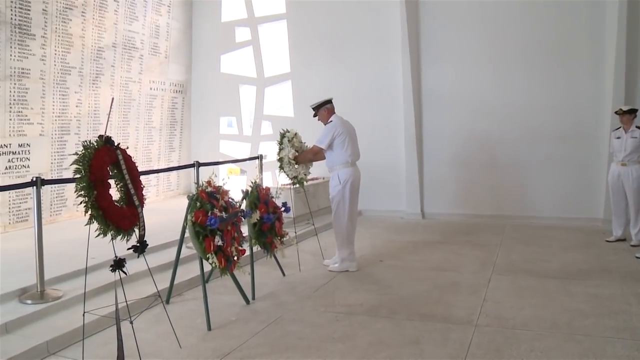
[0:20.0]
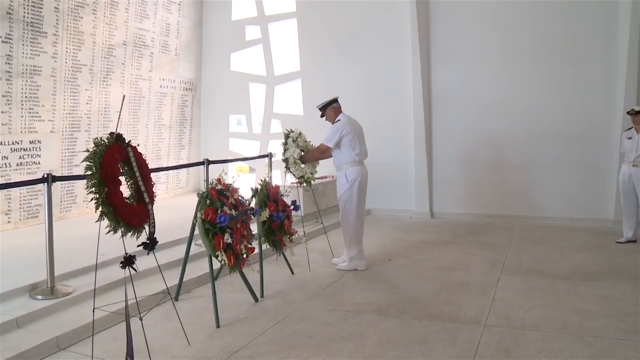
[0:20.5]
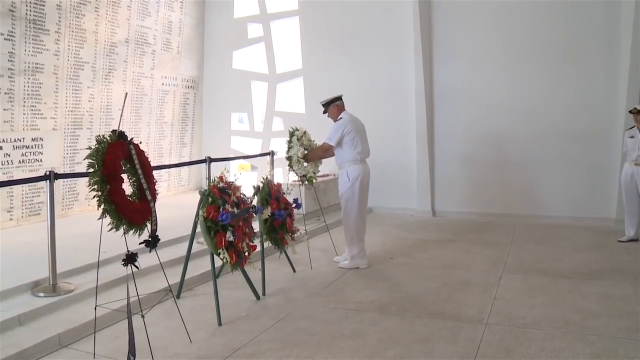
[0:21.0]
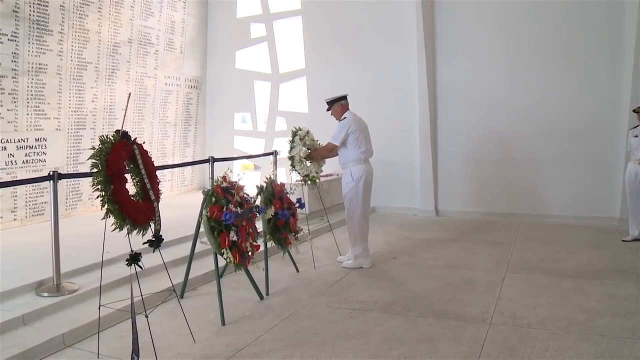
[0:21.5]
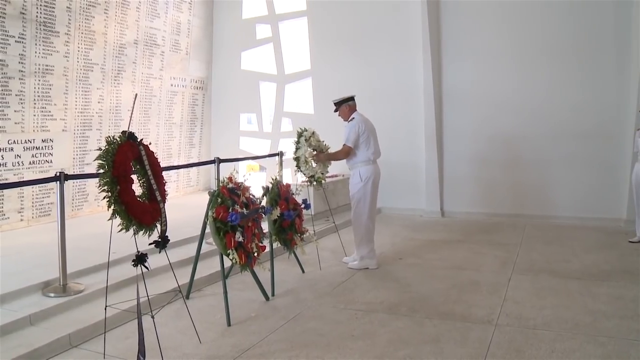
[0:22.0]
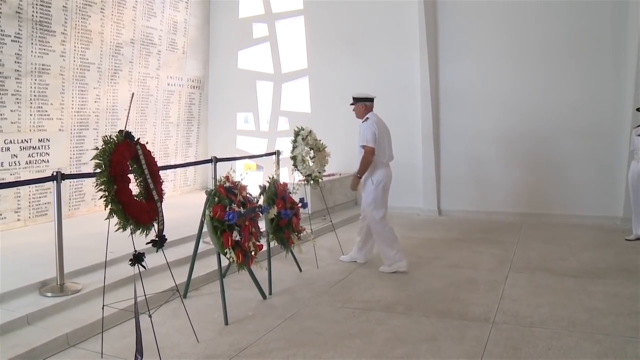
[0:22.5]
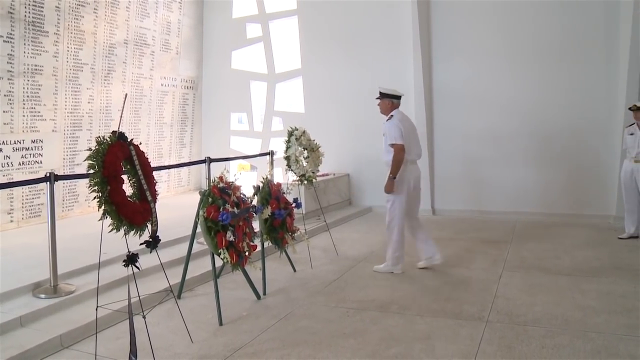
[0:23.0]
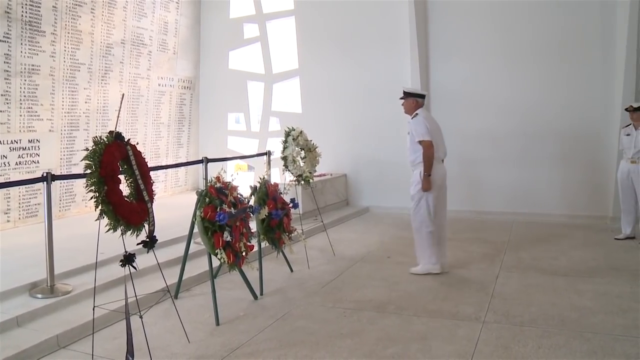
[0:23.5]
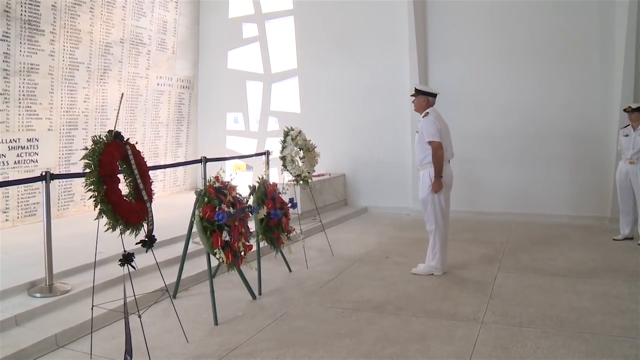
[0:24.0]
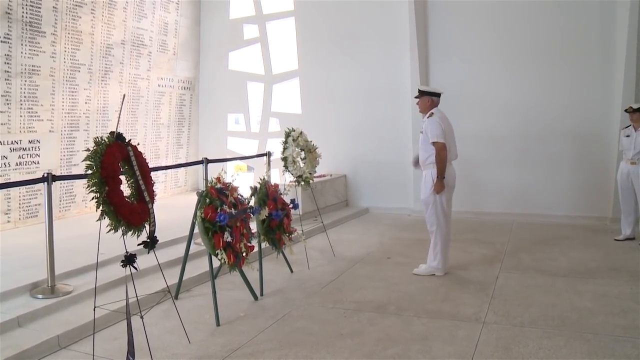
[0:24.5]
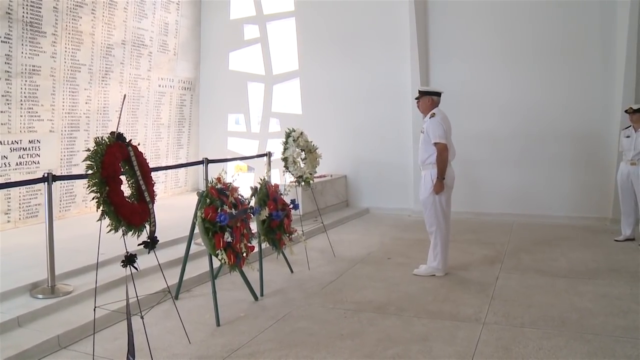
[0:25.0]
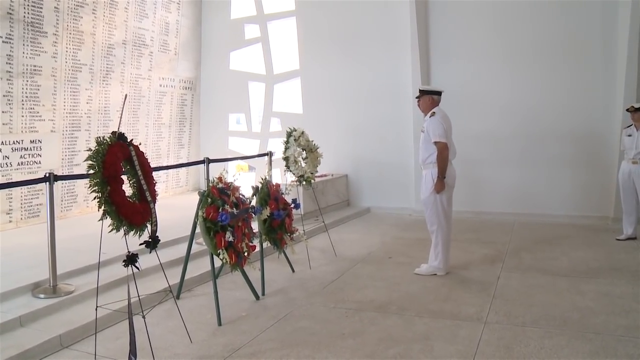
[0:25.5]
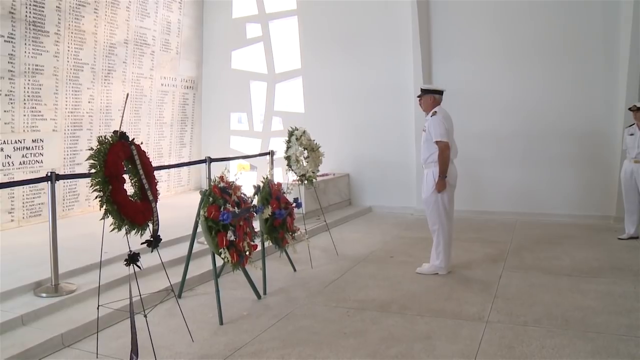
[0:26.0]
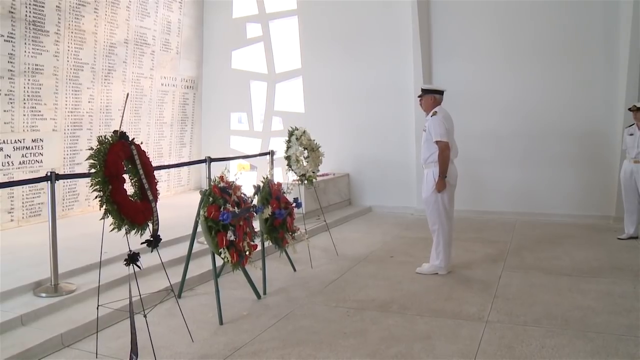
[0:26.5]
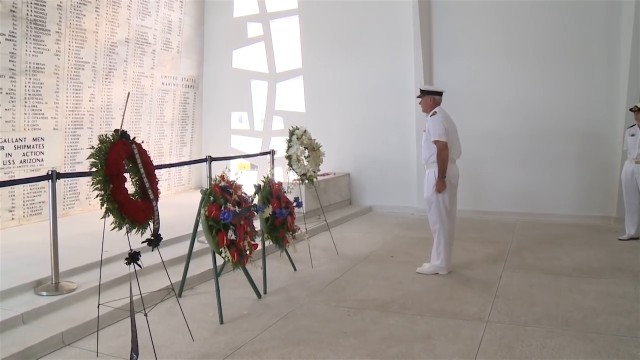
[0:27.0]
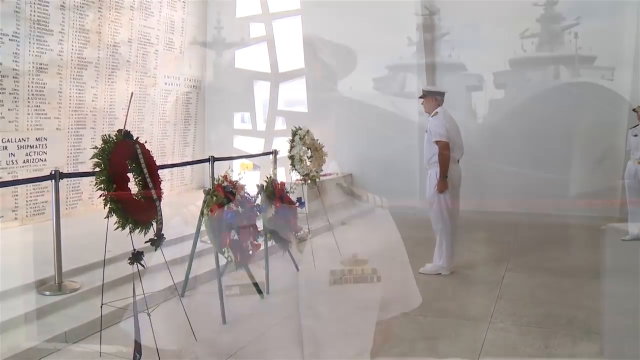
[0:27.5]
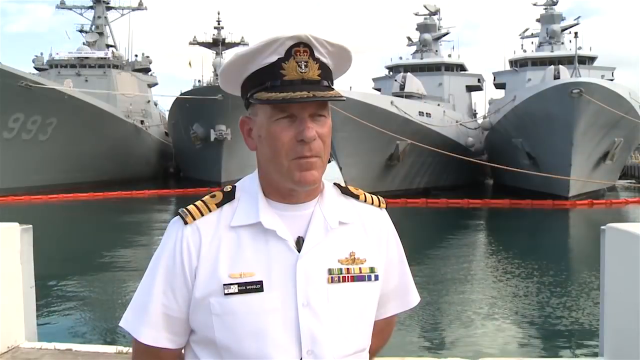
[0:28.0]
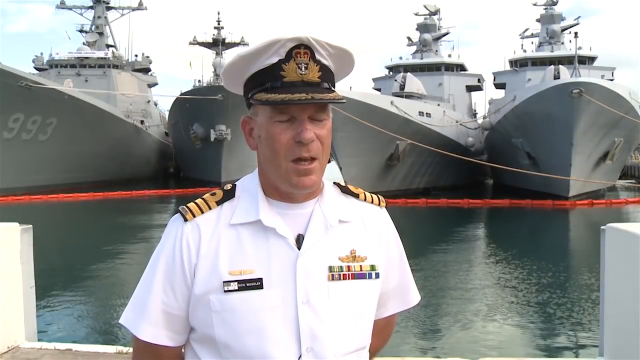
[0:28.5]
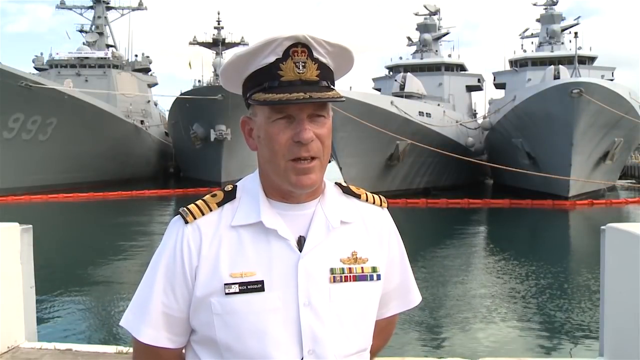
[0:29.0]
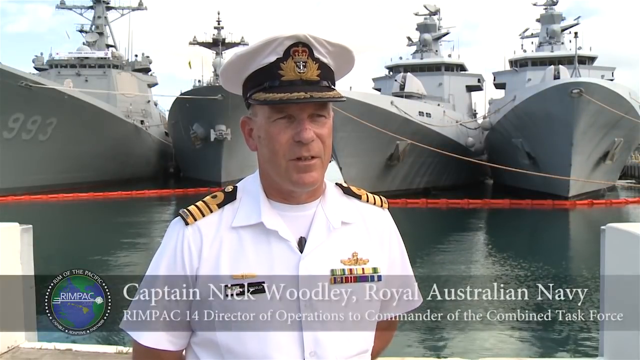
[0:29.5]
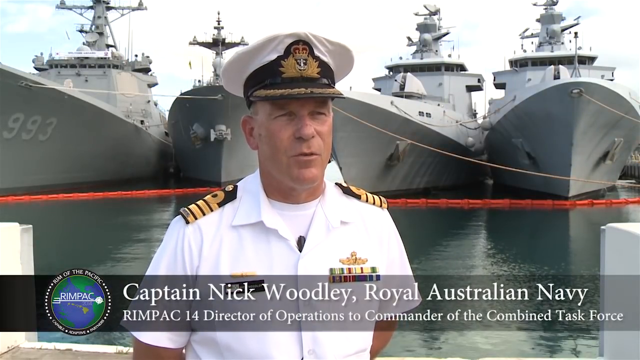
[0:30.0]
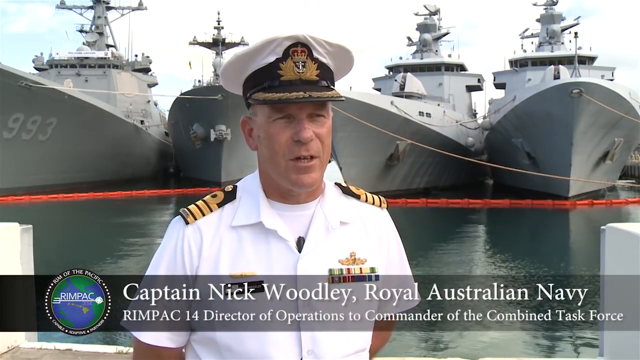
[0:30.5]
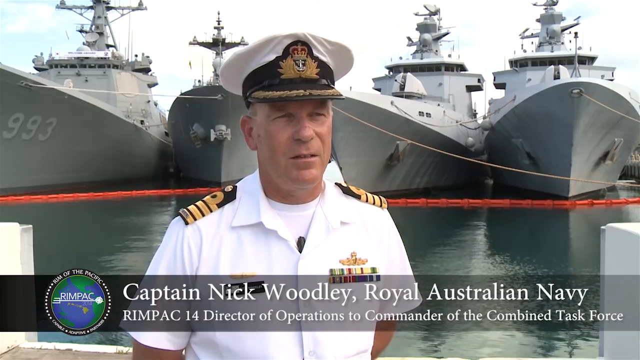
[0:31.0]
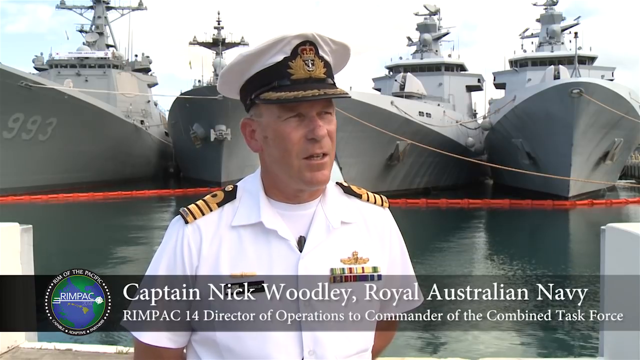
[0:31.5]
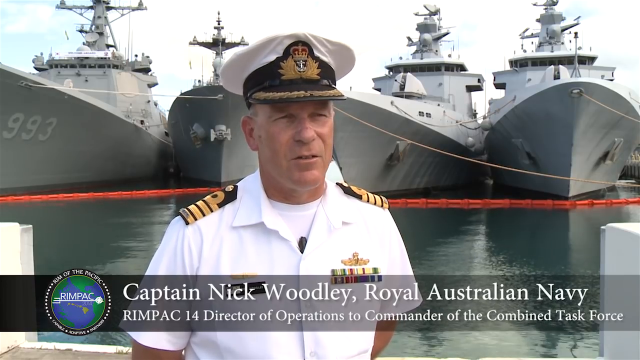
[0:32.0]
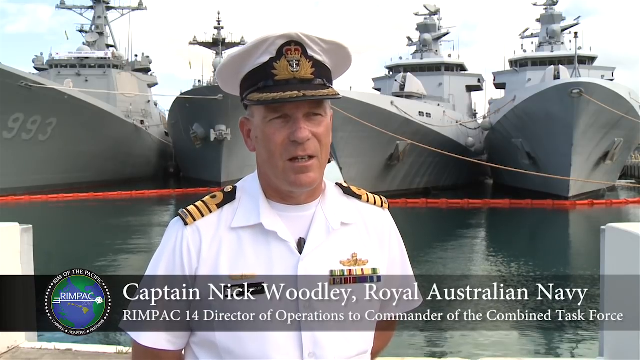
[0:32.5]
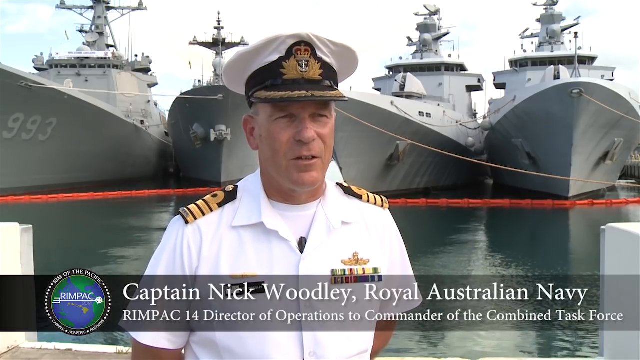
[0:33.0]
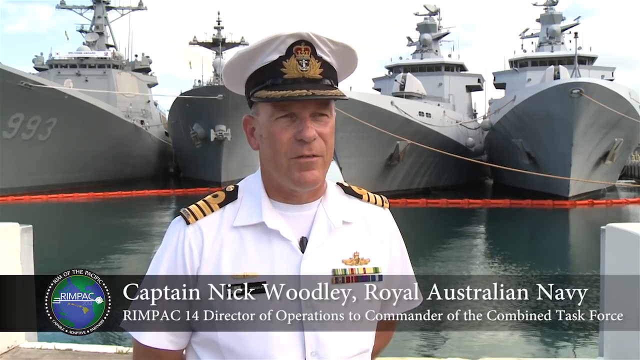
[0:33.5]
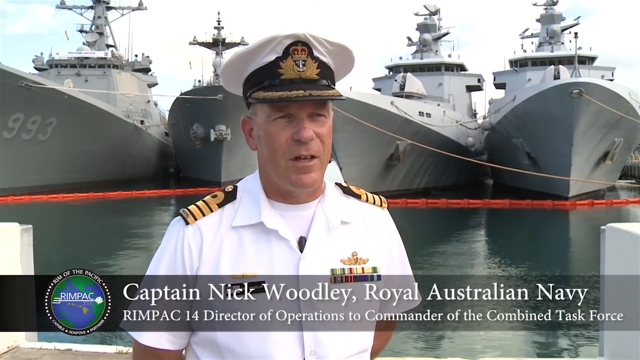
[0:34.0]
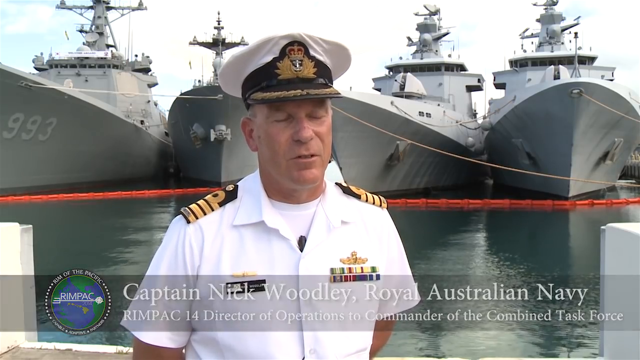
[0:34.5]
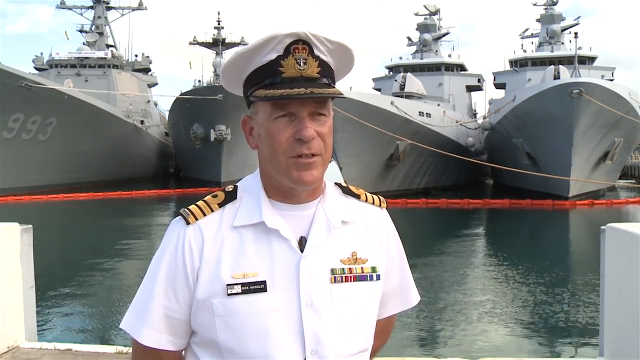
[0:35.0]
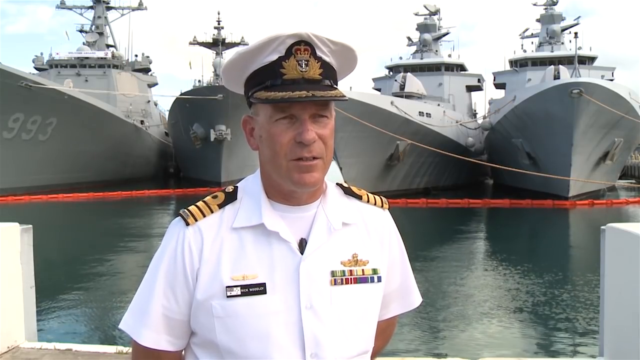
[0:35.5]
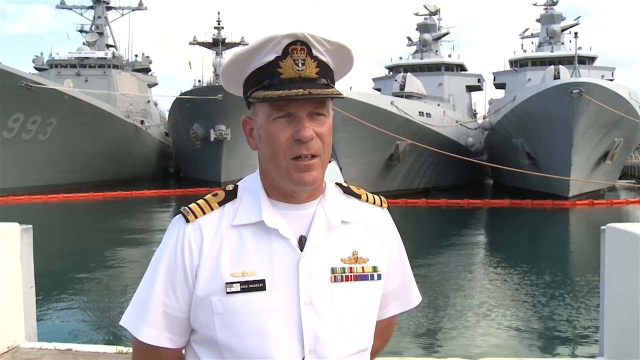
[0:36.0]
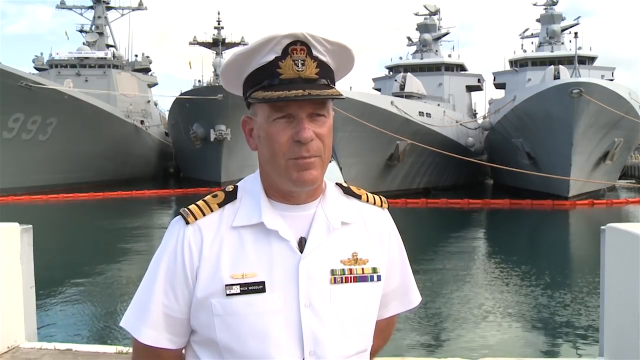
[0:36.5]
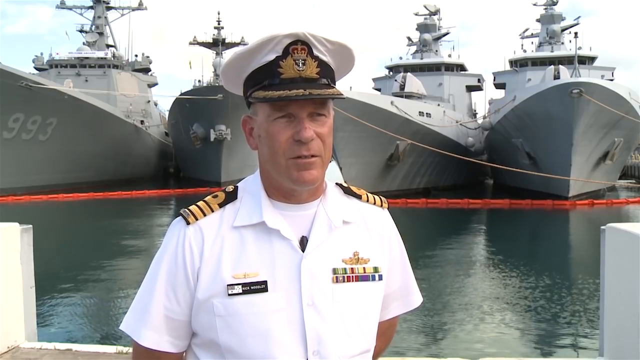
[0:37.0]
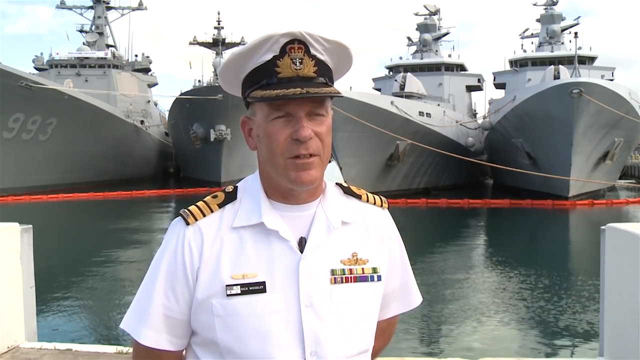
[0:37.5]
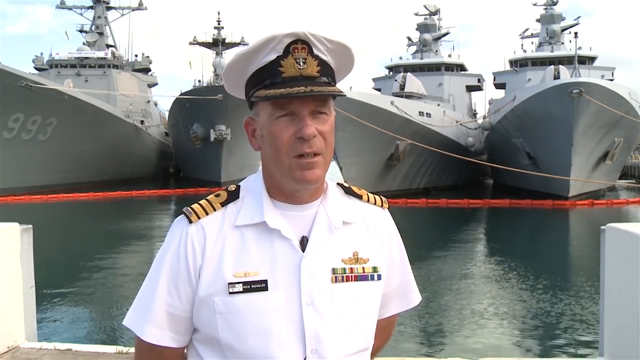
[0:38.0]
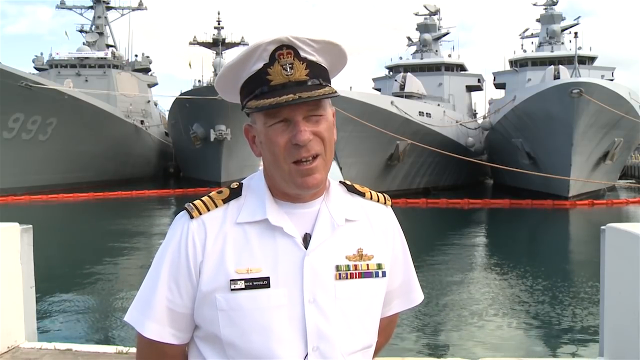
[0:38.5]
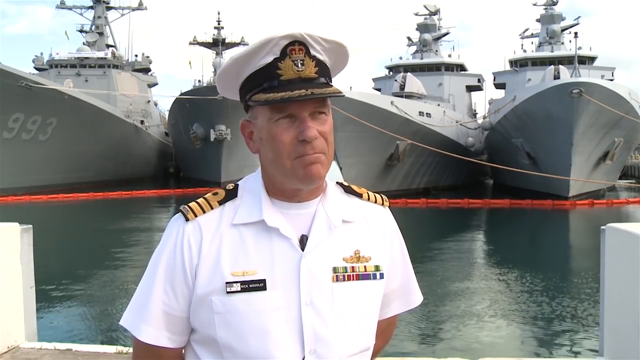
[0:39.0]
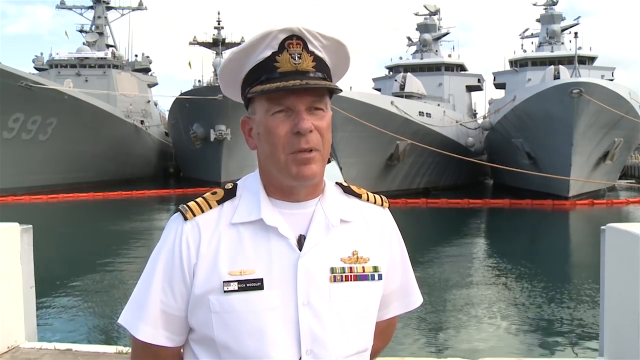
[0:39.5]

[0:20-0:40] The man in the white uniform gently places the wreath on the stand, adjusts it, takes two steps back and stands very straight. He raises his right arm to the top of his forehead in a salute, then lowers it. The film switches to another older man in the same uniform but with more ornate medals and insignia, likely a captain or someone of higher military rank. He stands in front of what looks like four military ships in the background and speaks to the camera in a relaxed, nonchalant way with normal expressions. Four wreaths in total stand in front of the memorial: one is green with red, two have multiple floral colors, and the one just placed by the man in white is made of all-white flowers.